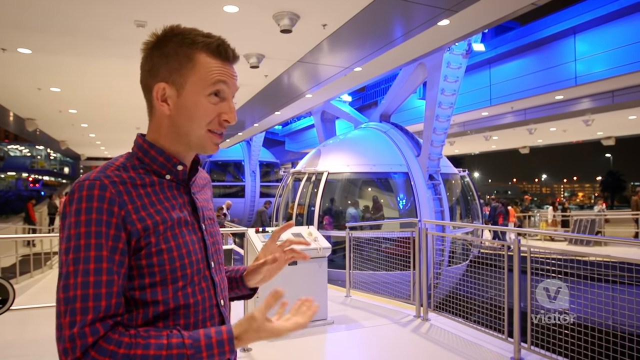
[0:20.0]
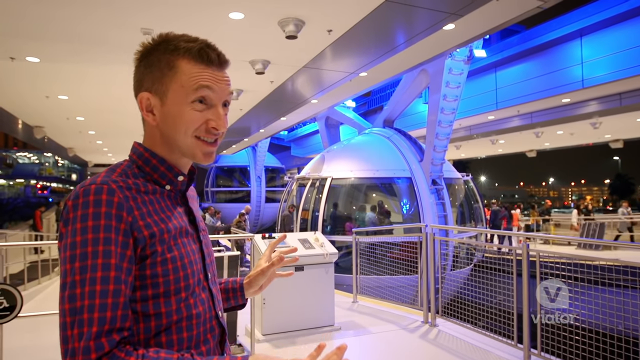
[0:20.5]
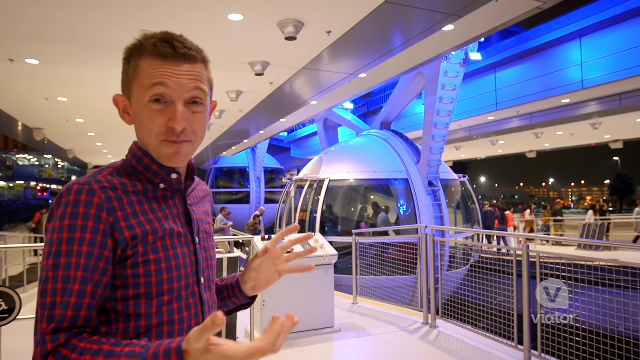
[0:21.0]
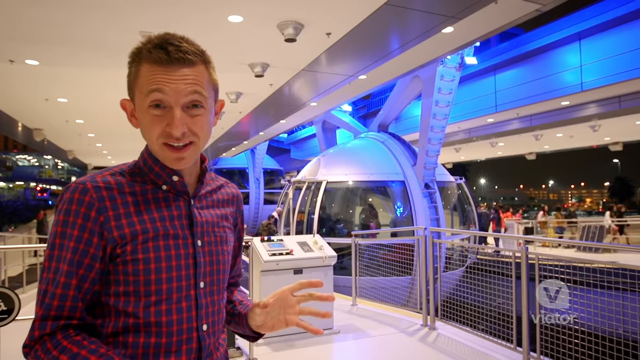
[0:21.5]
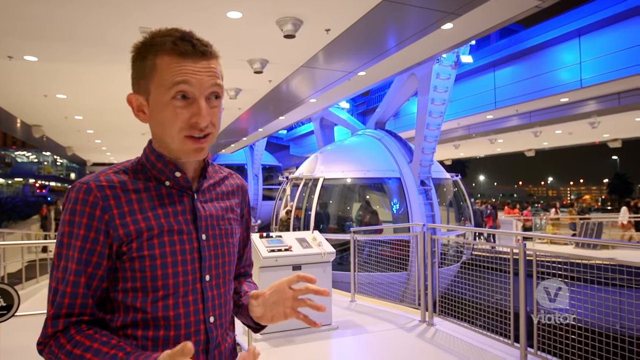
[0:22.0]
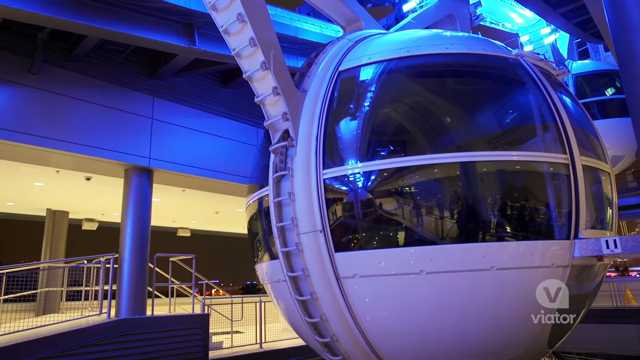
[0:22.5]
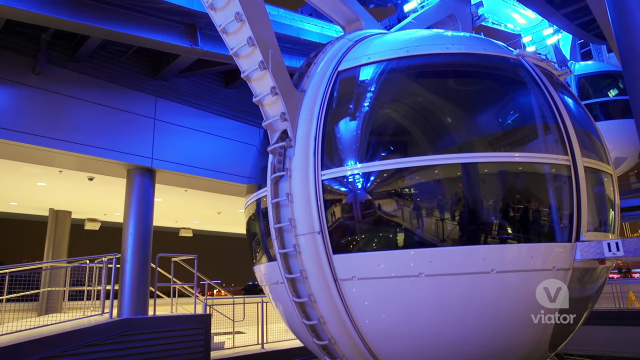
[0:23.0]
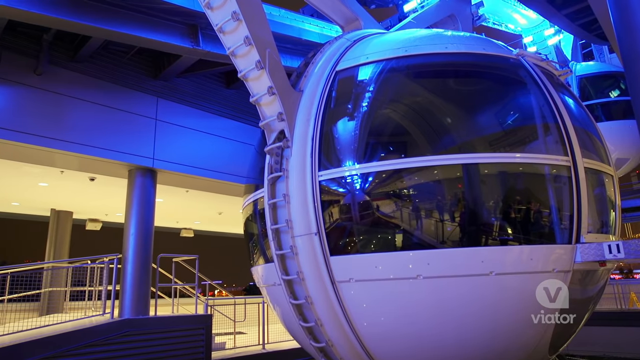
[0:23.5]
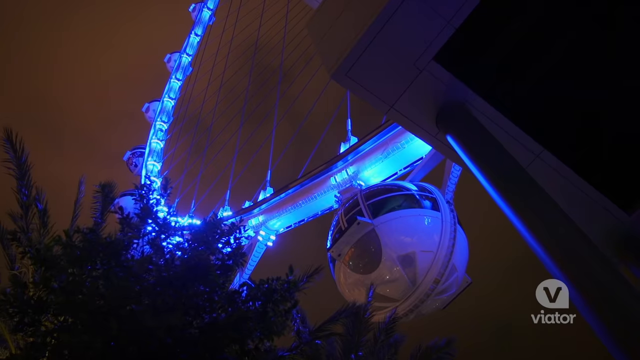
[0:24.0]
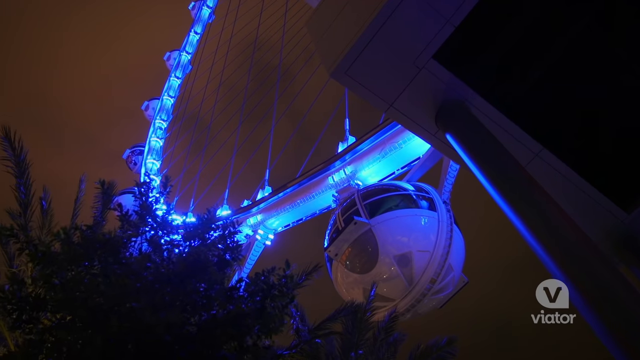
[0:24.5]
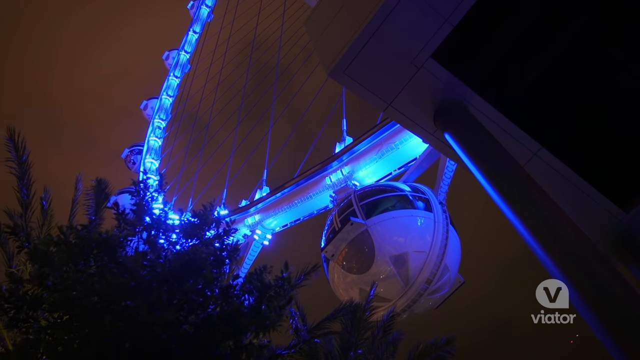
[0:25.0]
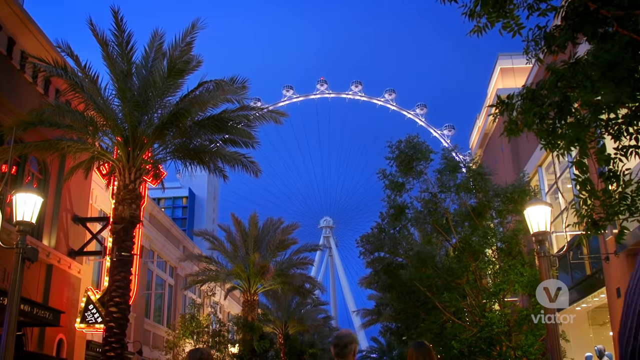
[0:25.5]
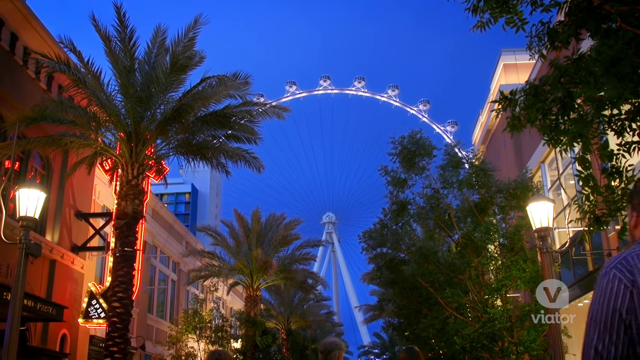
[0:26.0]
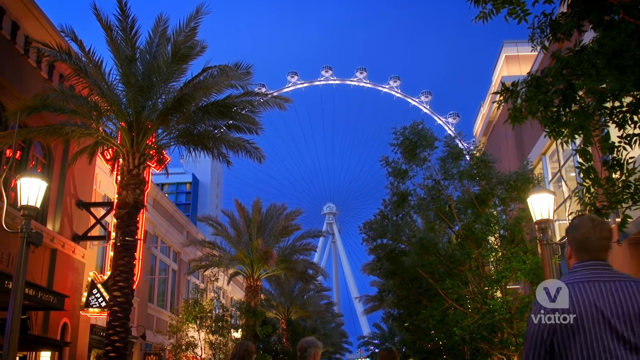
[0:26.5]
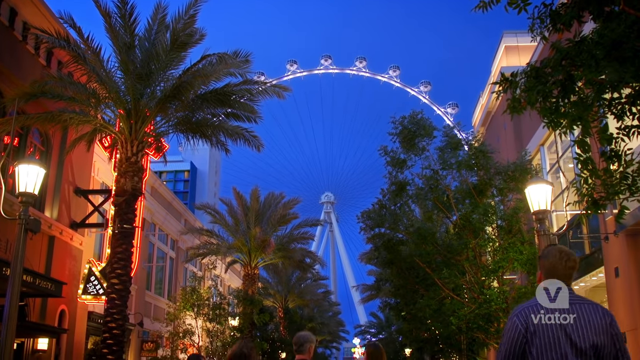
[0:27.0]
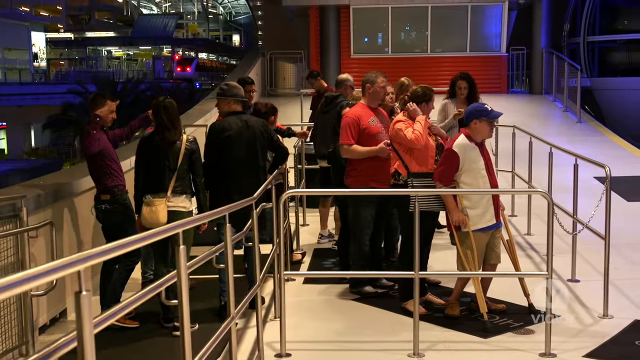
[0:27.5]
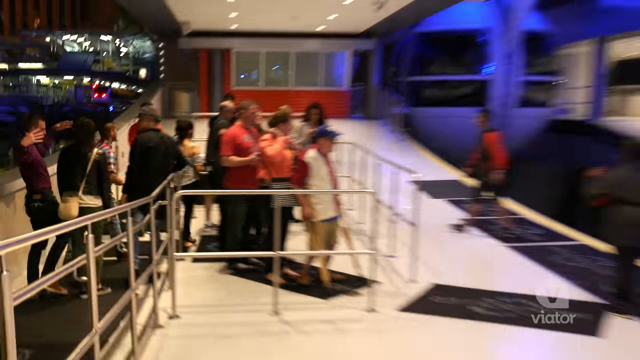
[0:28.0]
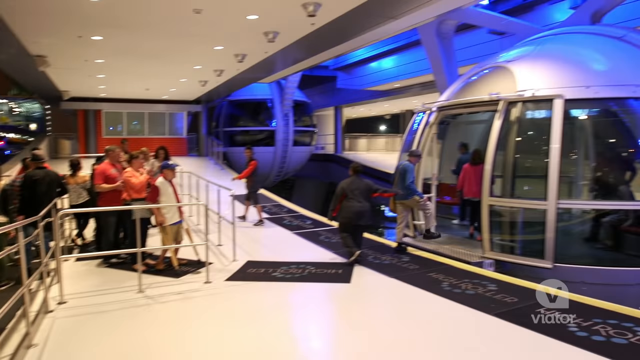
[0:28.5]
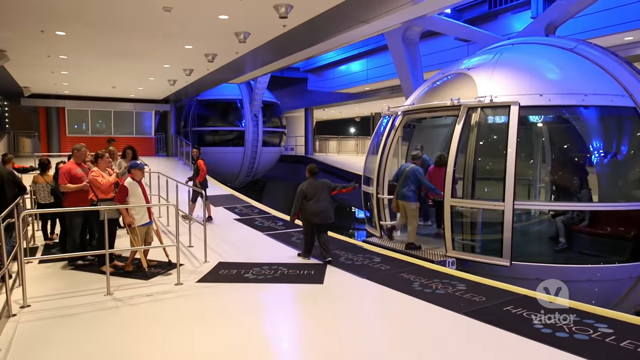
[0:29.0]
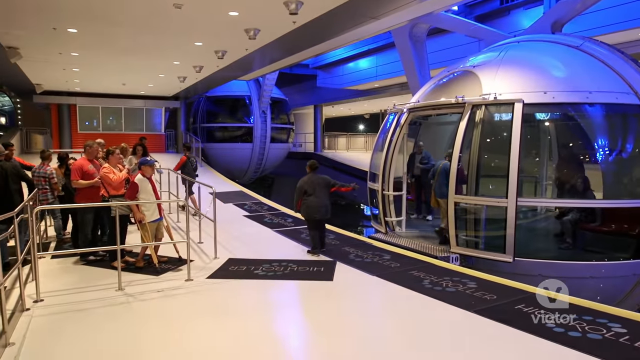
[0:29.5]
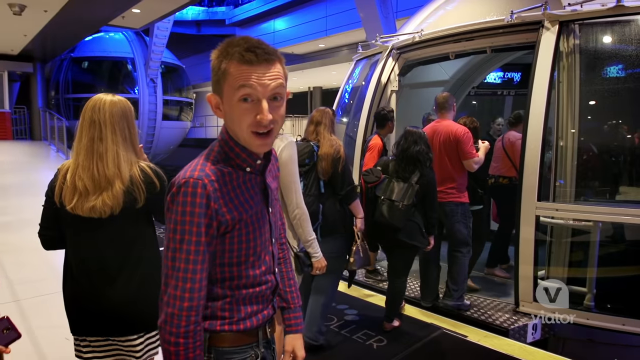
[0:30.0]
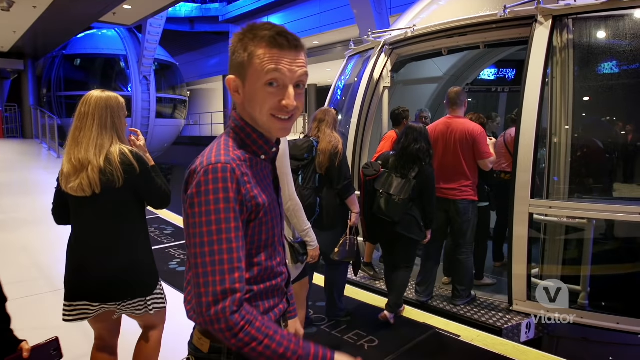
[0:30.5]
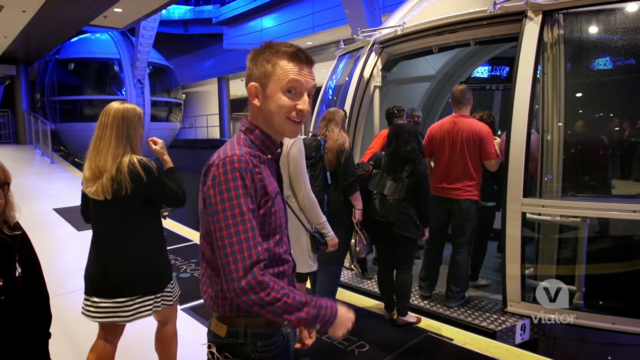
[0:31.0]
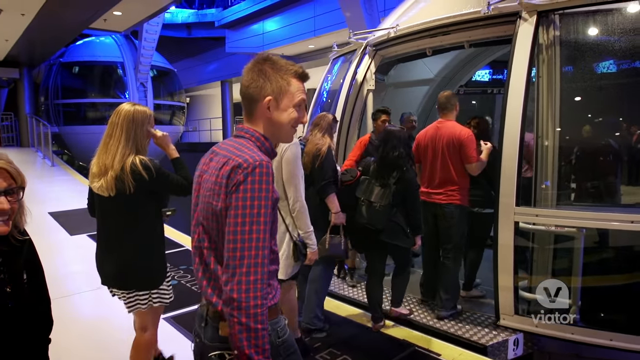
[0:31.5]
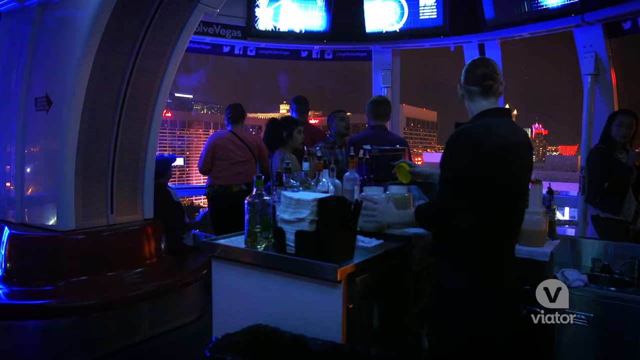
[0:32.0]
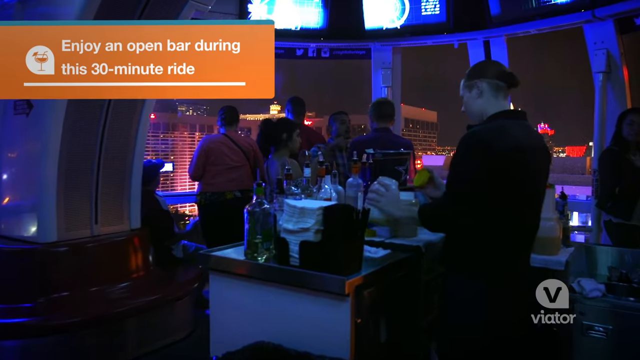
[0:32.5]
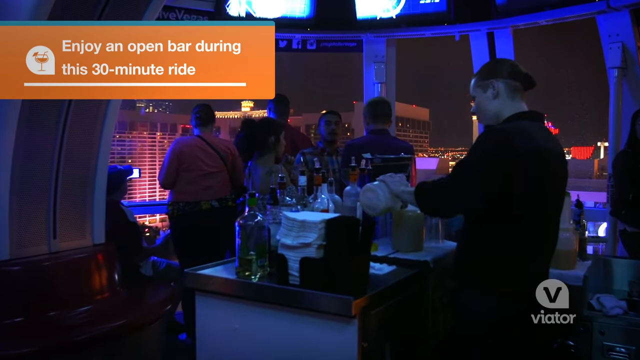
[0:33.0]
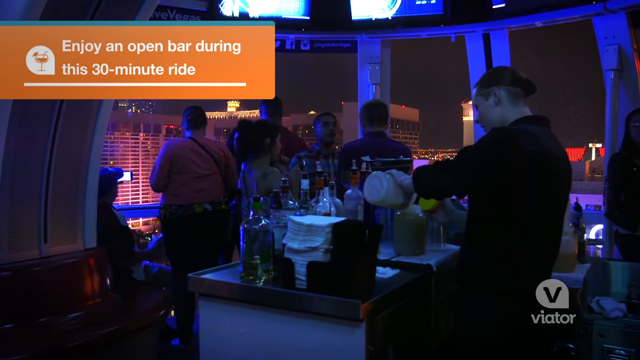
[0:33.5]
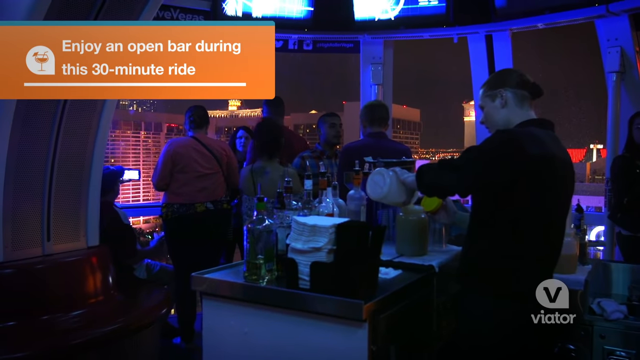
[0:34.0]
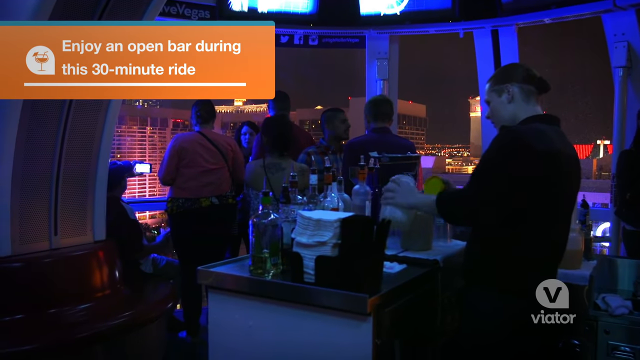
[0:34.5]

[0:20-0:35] The man gestures toward the orbed ride, pointing at it, and there is a somewhat close view of it. The view pans backwards to show the ride from a distance, then swirls arched up to the left and upwards, the whole ride going upwards in a circular manner. Over a street with palm trees, the arched ride rises, with the orbs atop the arched area, running along the outside top. People get inside an orb. Someone stands in a bar serving something like drinks, and text at the top left reads "enjoy an open bar during this 30 minute ride." Various people are drinking and having a good time with their cocktails.